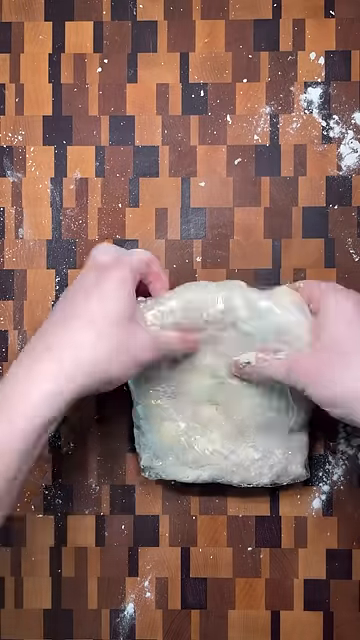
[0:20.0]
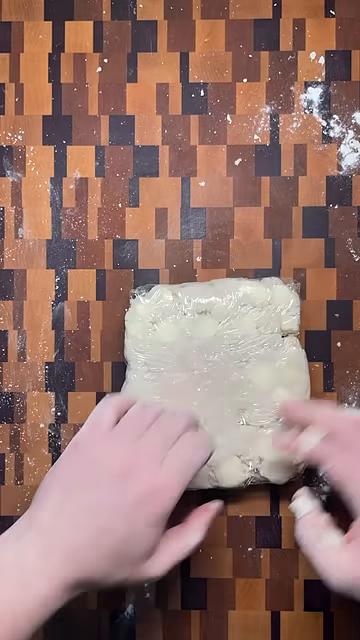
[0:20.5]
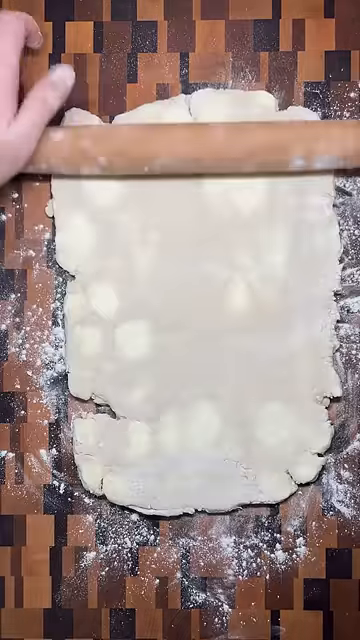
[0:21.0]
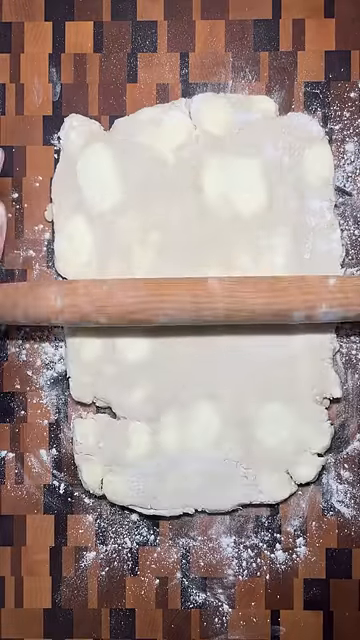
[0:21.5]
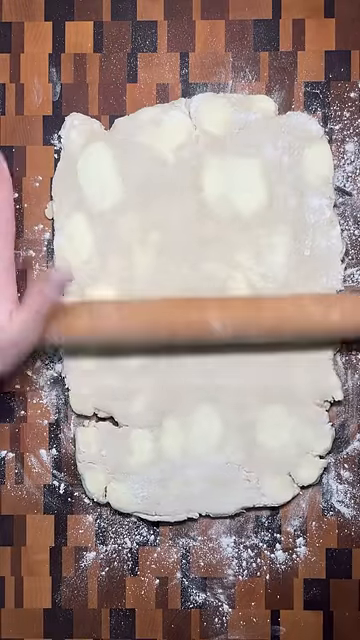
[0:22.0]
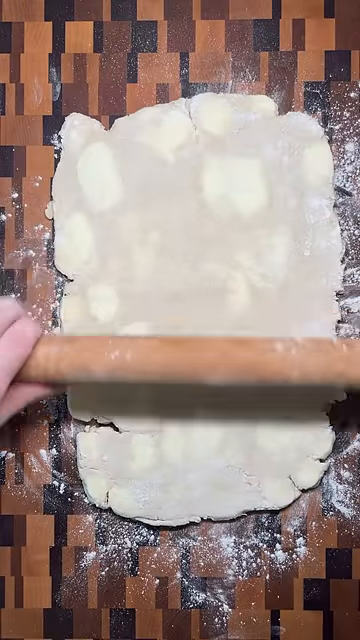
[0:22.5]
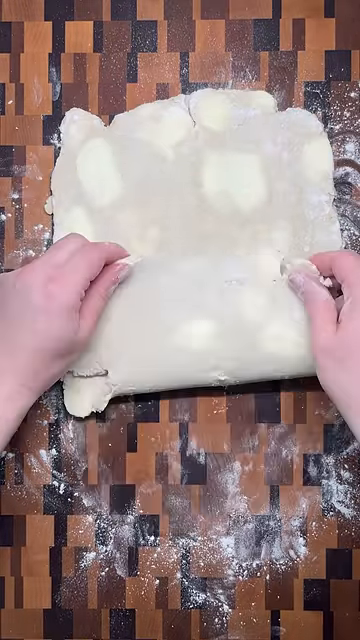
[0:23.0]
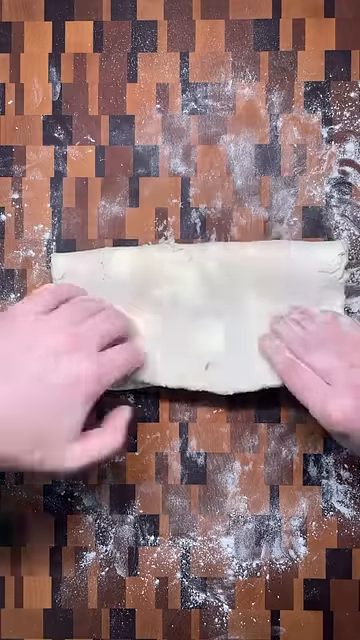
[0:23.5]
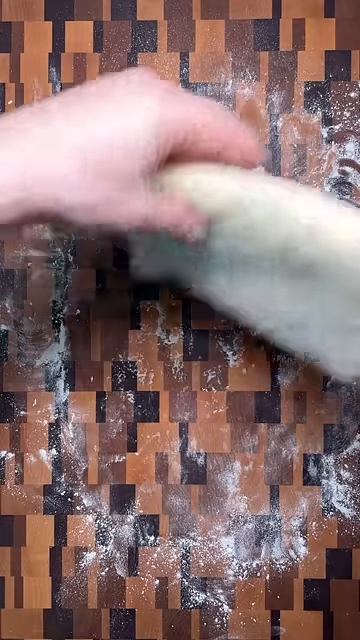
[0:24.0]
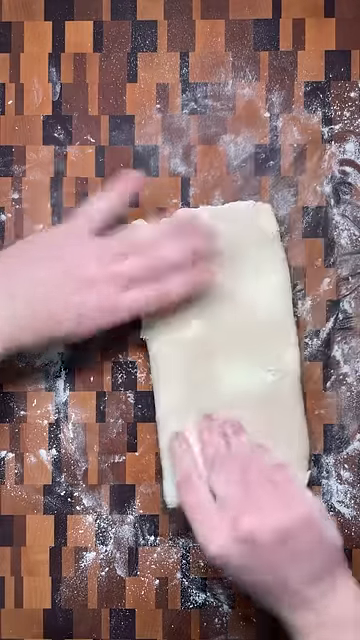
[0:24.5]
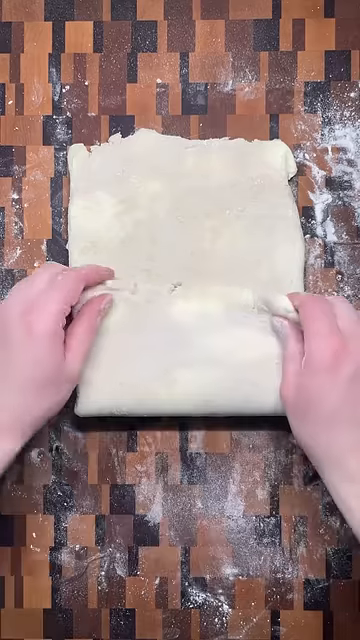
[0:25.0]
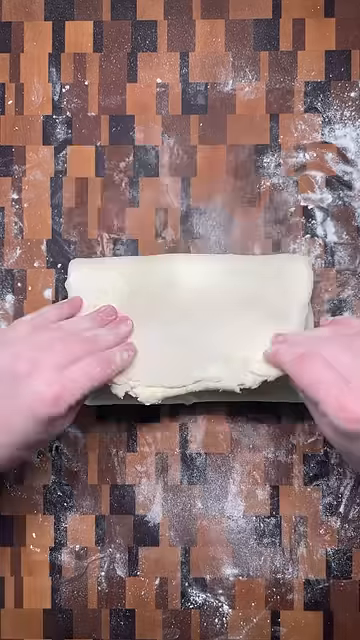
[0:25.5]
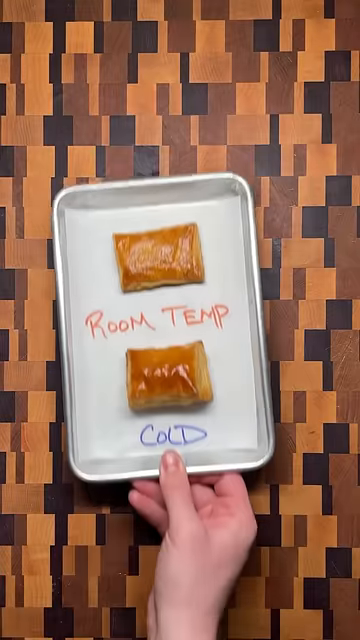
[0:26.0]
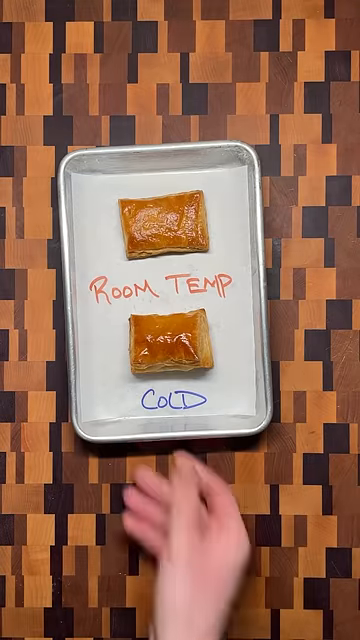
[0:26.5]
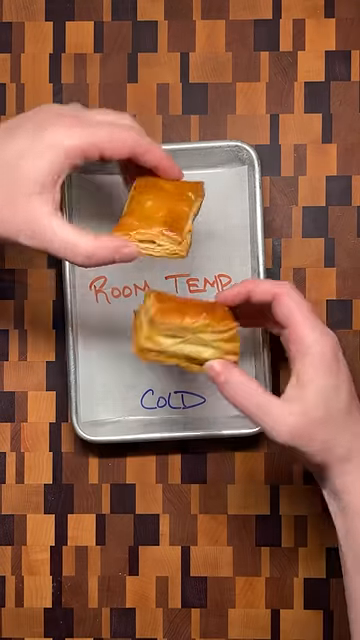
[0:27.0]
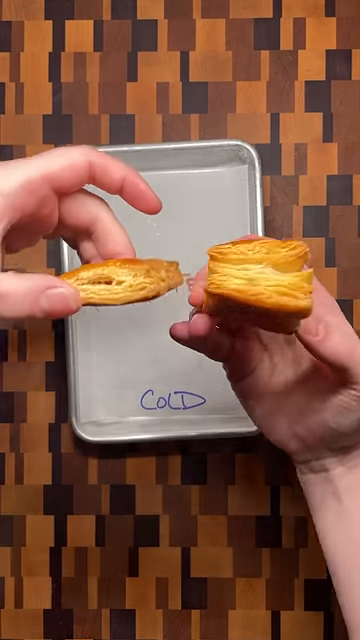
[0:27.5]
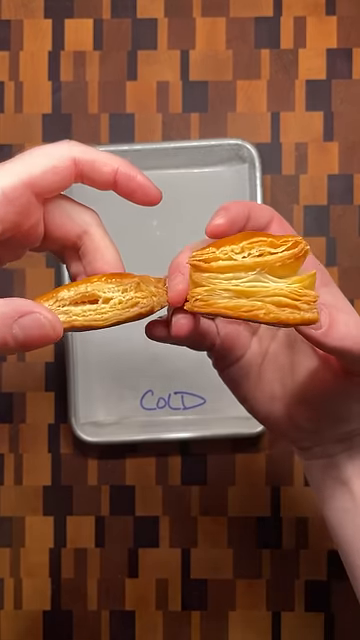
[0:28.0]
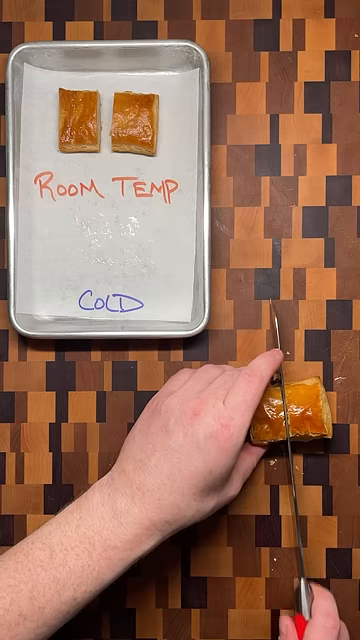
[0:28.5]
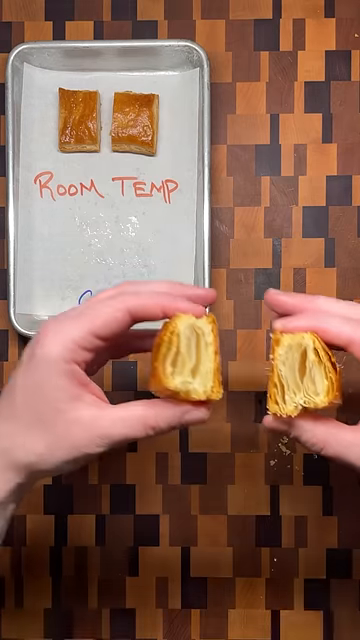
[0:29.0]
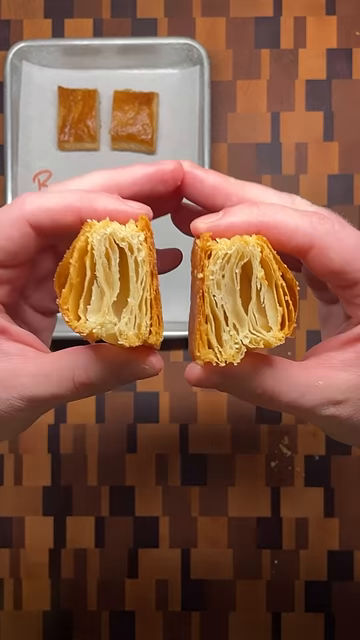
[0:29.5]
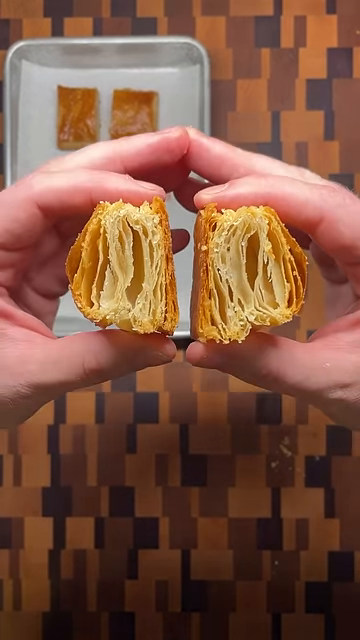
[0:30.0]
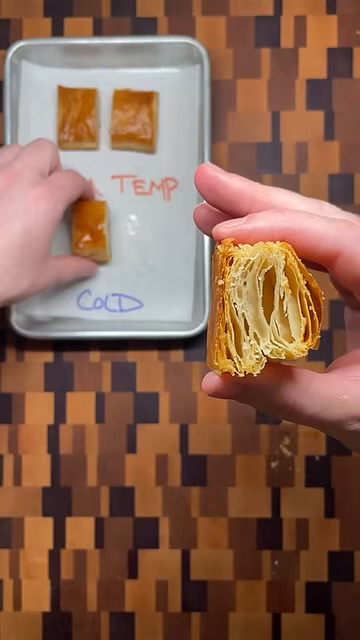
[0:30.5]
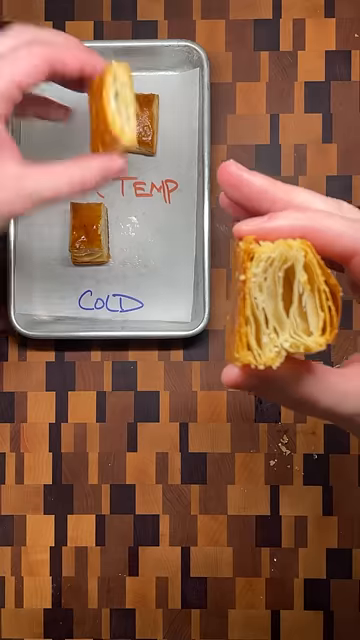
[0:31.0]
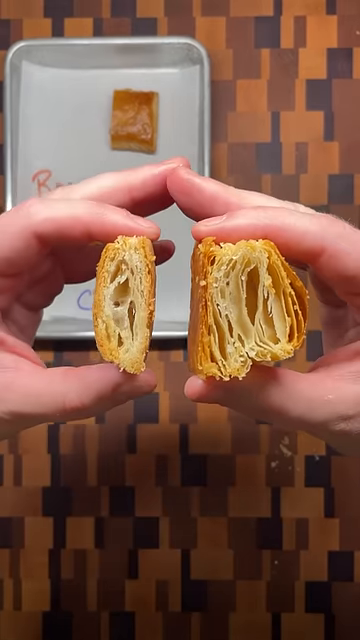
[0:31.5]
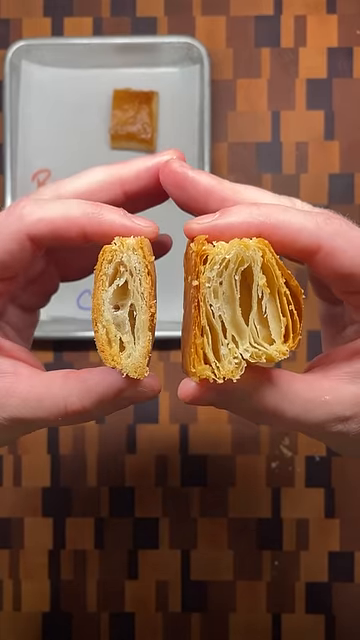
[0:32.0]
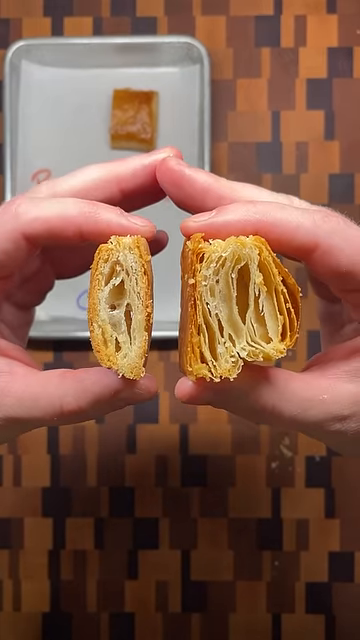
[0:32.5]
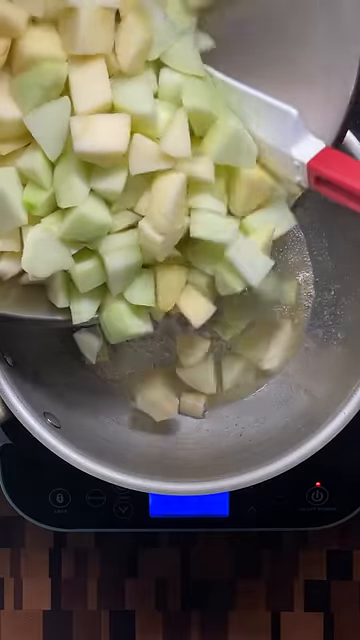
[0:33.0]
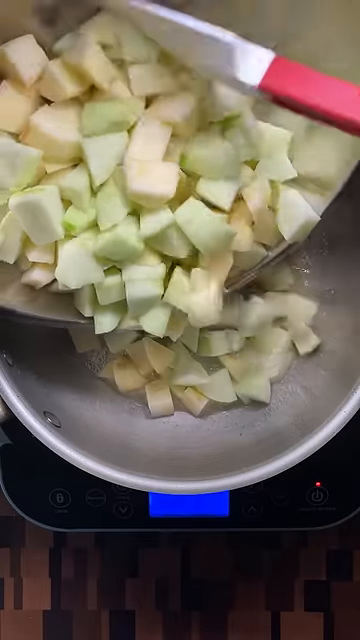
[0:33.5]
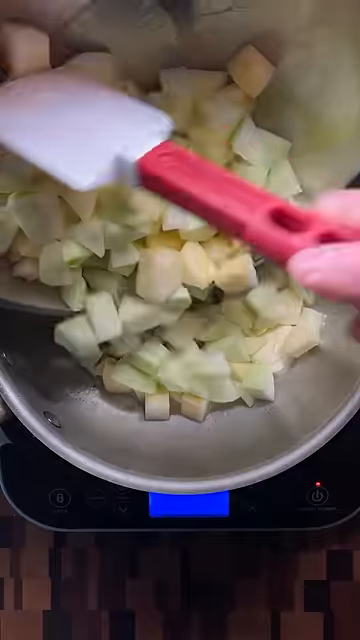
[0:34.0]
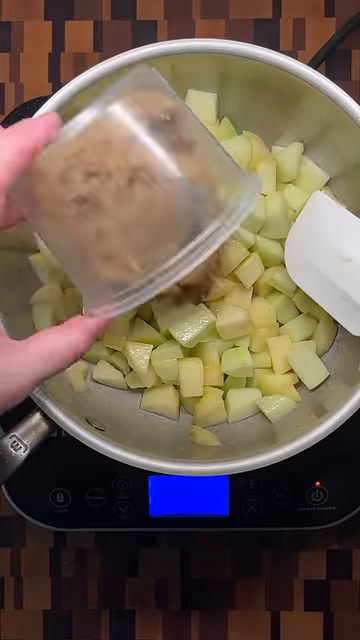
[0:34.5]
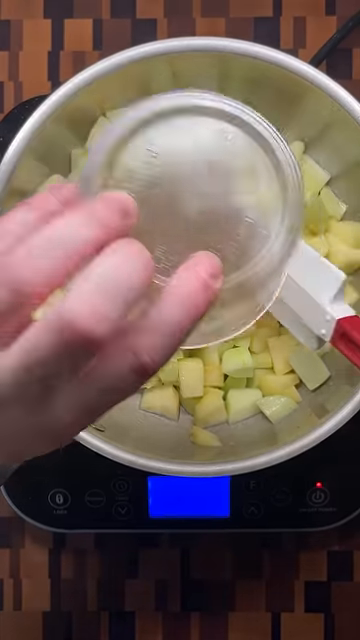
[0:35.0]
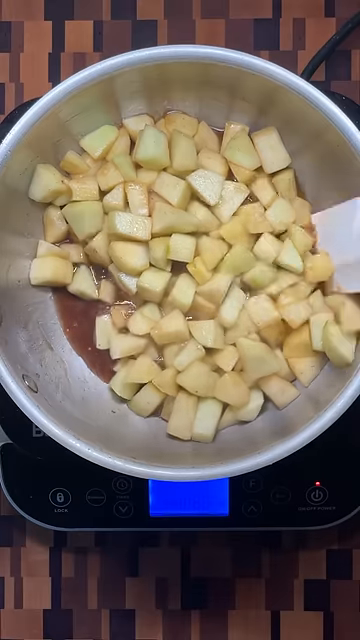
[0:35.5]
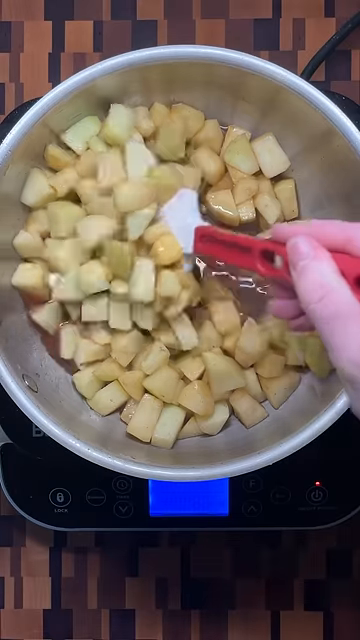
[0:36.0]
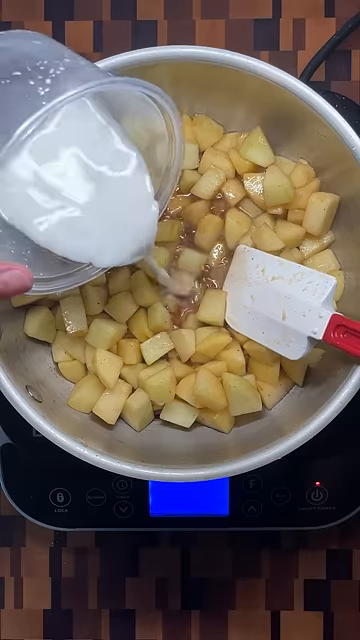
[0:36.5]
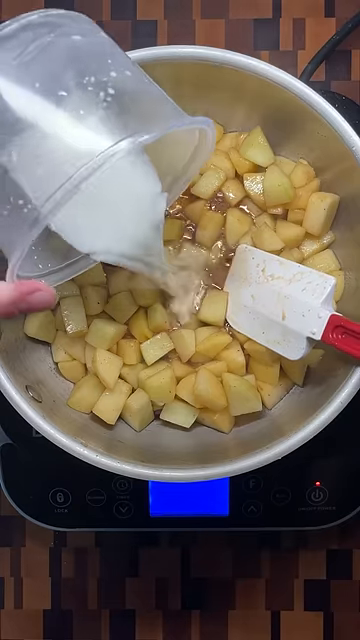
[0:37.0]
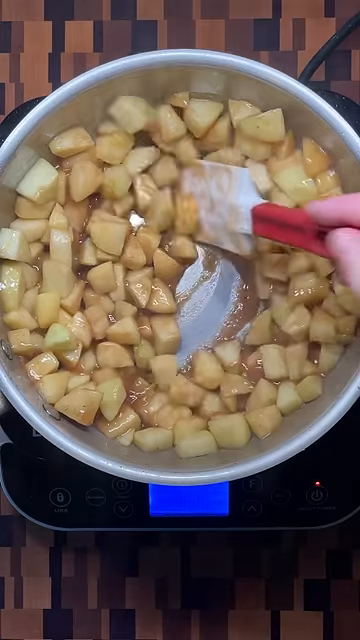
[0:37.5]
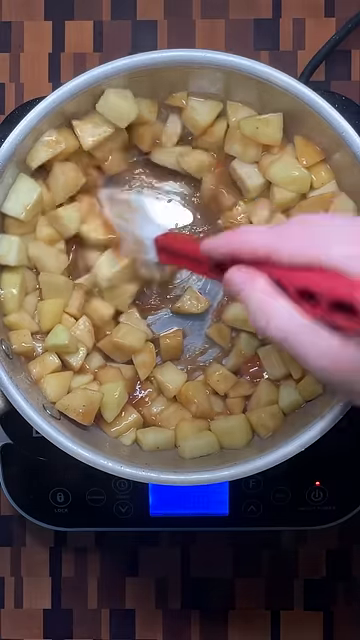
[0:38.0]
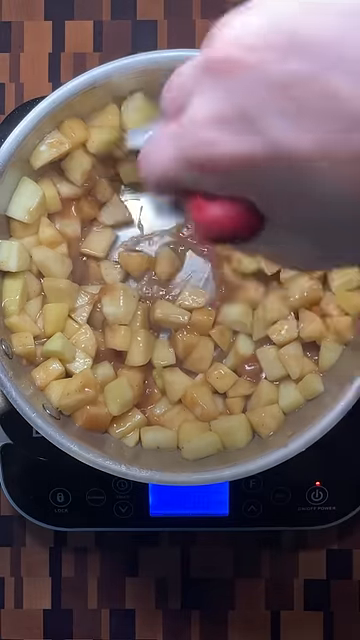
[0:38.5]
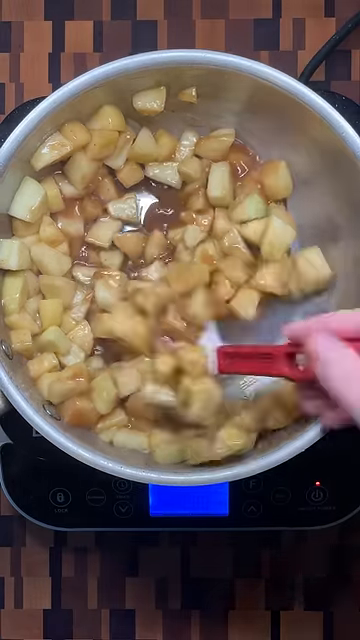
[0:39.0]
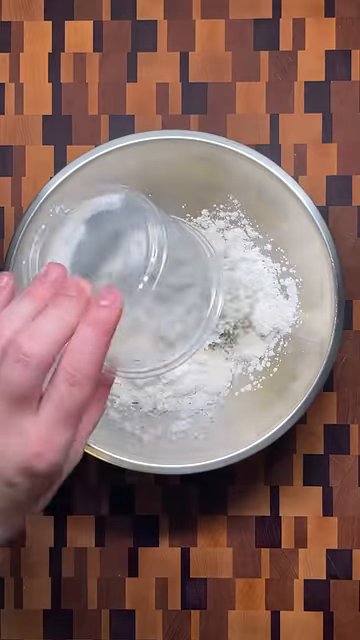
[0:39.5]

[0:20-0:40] The person cuts some fruits and mixes a lot of unidentified ingredients. What seems to be milk, flour and soda is then mixed with the fruit pieces.